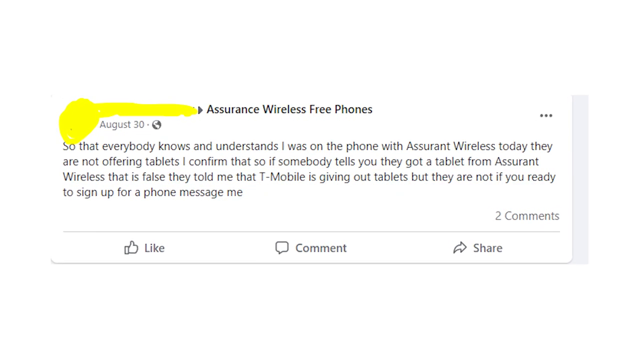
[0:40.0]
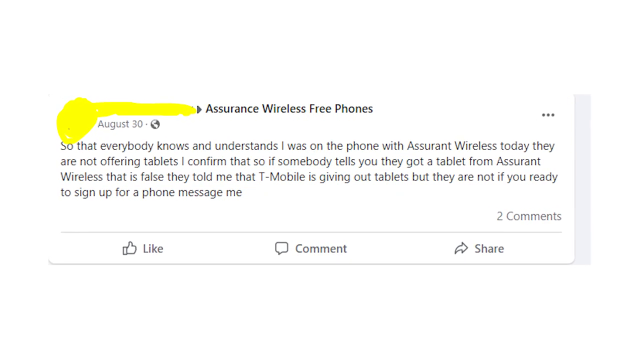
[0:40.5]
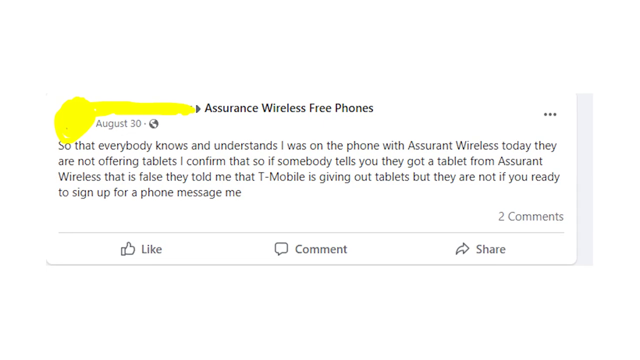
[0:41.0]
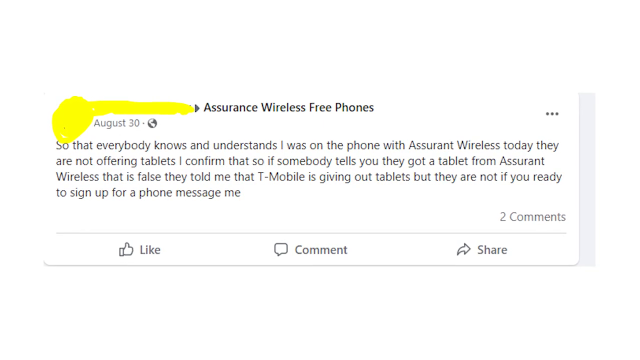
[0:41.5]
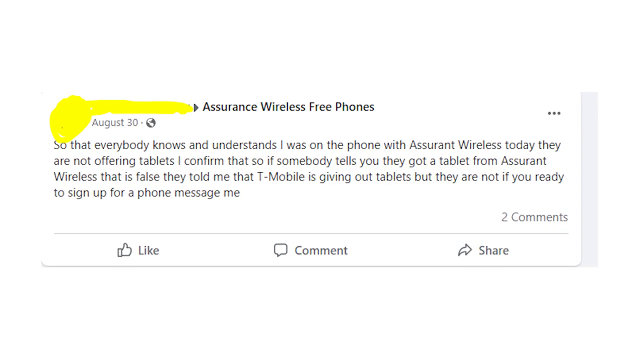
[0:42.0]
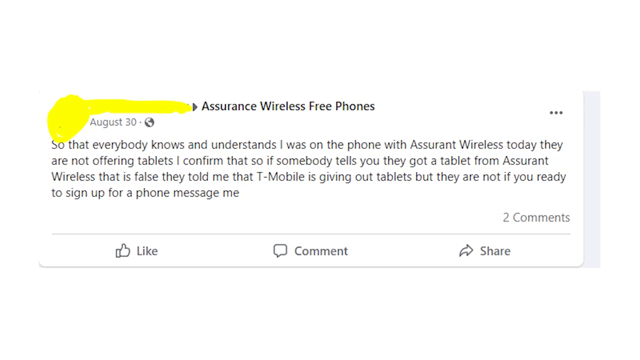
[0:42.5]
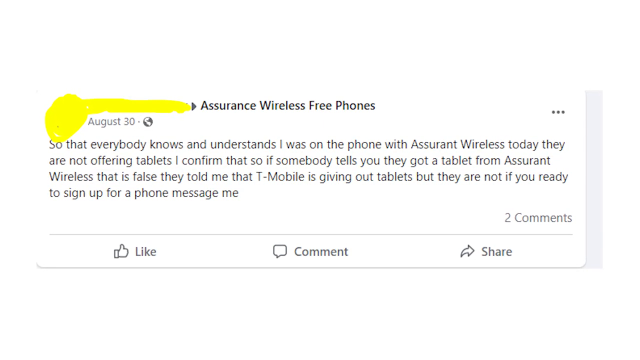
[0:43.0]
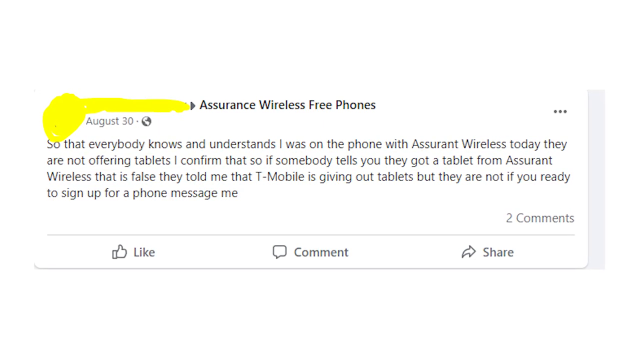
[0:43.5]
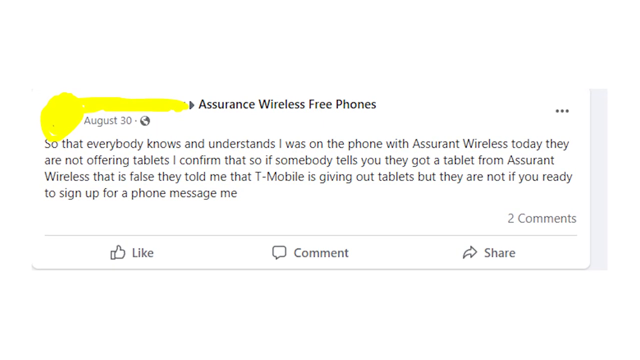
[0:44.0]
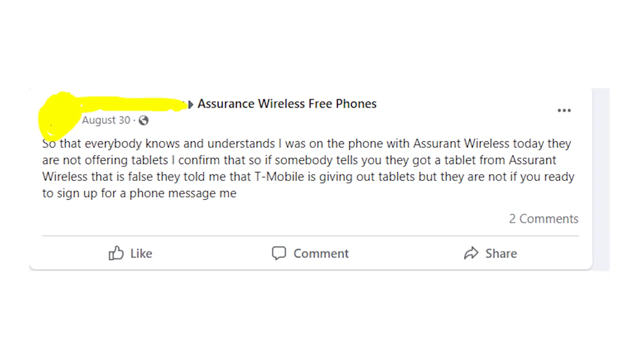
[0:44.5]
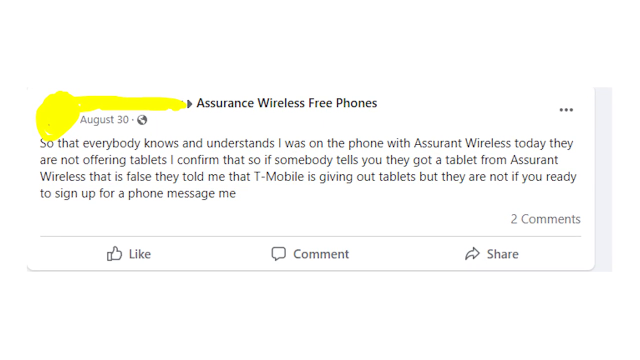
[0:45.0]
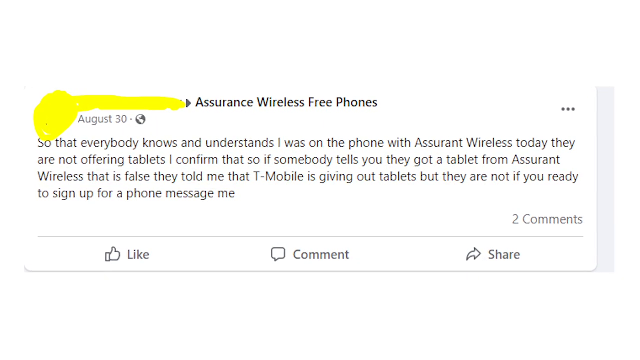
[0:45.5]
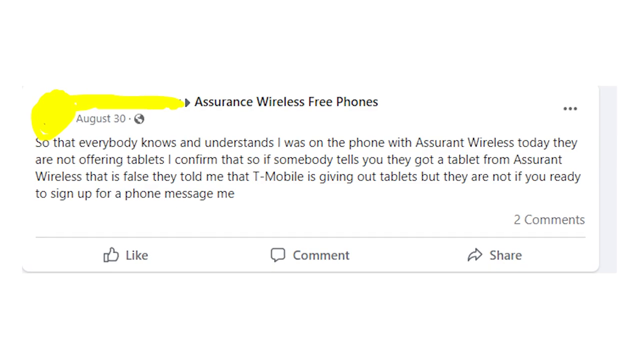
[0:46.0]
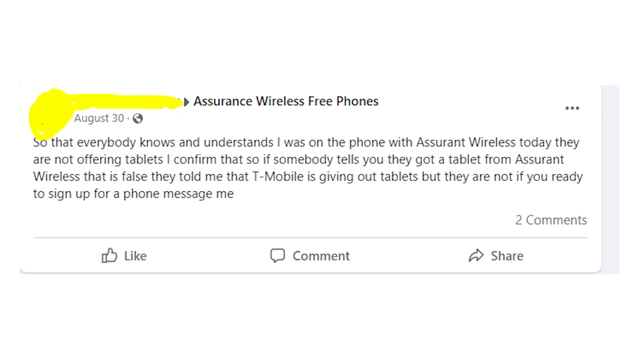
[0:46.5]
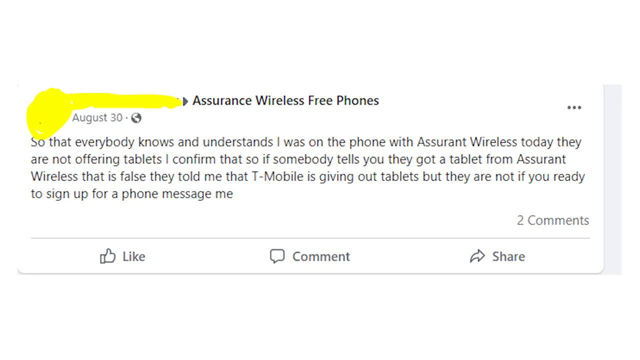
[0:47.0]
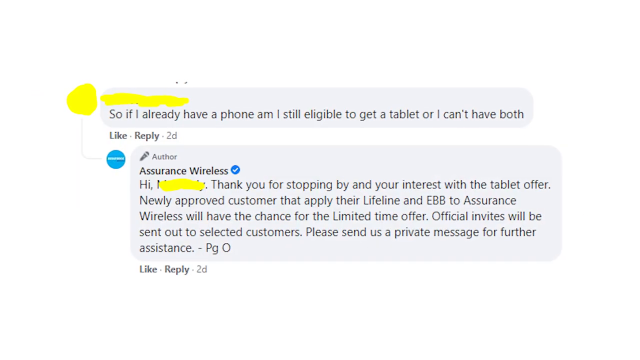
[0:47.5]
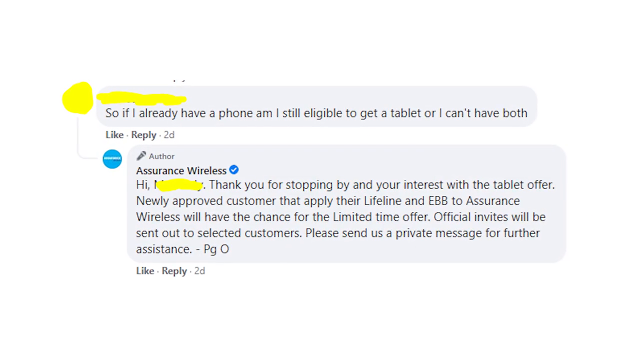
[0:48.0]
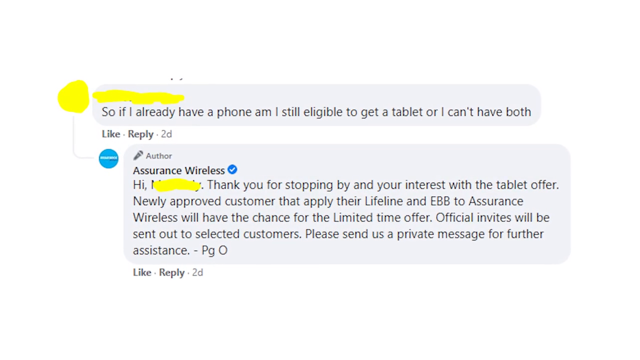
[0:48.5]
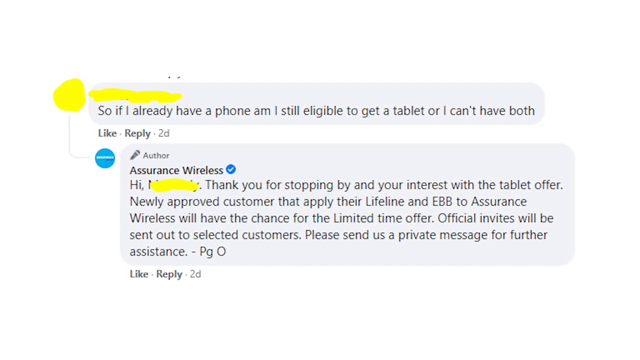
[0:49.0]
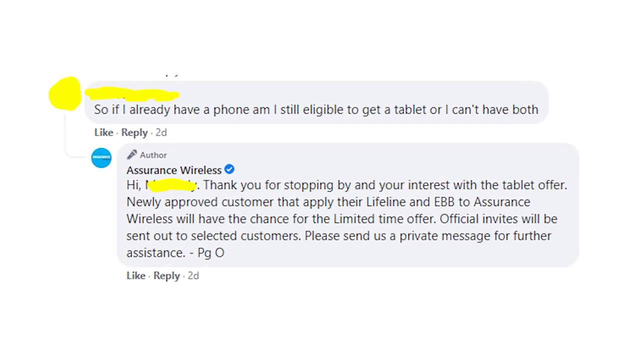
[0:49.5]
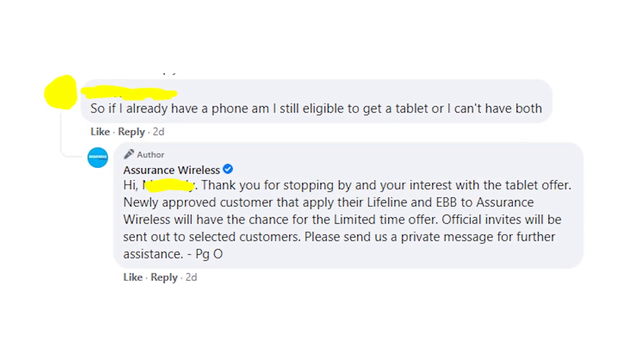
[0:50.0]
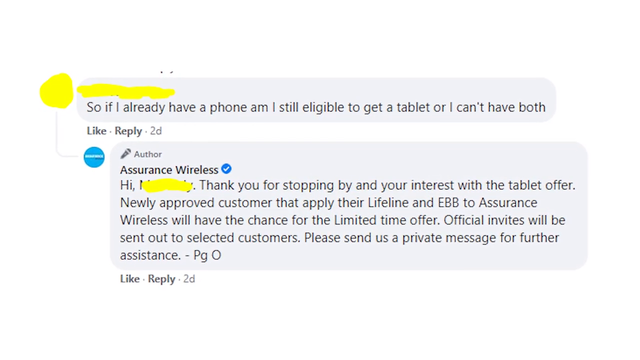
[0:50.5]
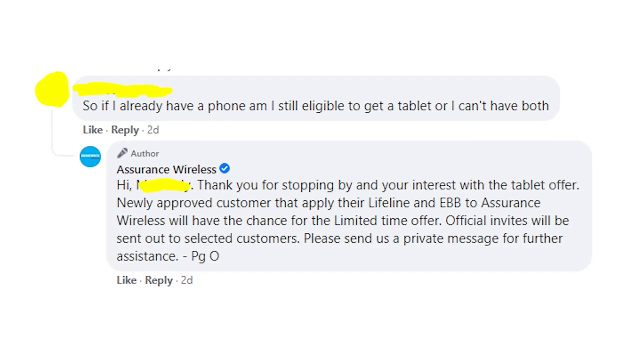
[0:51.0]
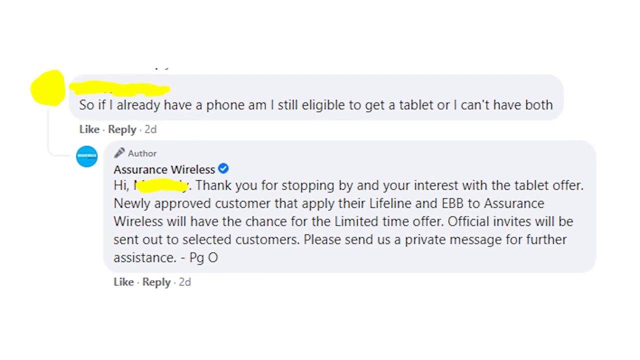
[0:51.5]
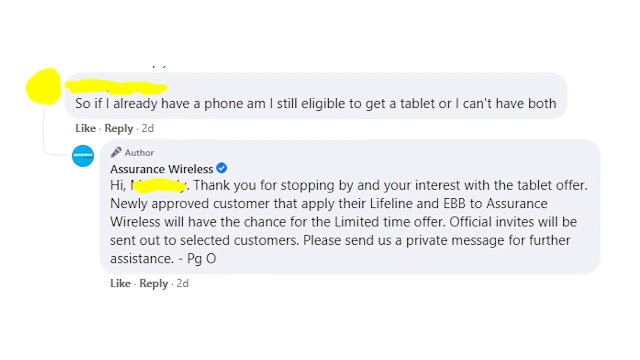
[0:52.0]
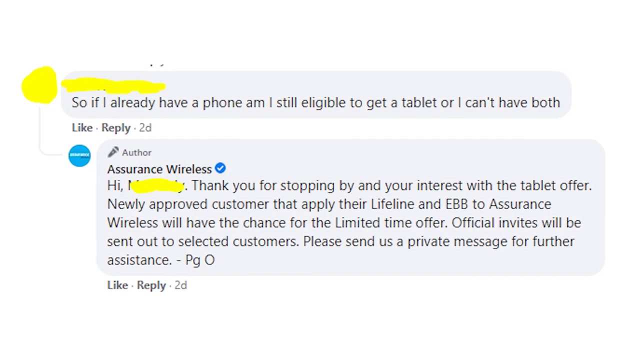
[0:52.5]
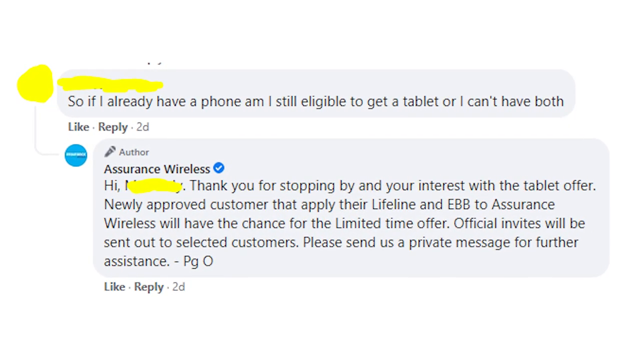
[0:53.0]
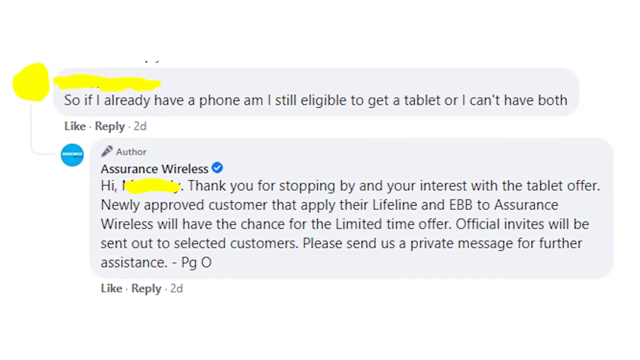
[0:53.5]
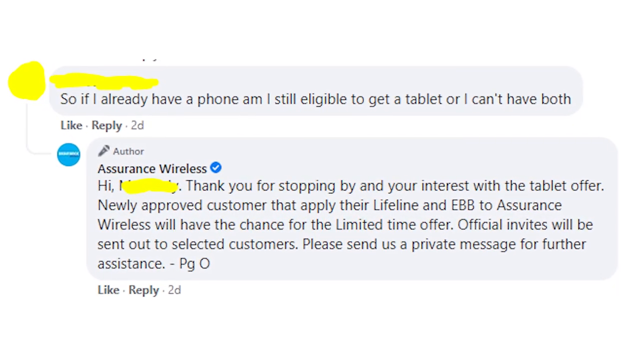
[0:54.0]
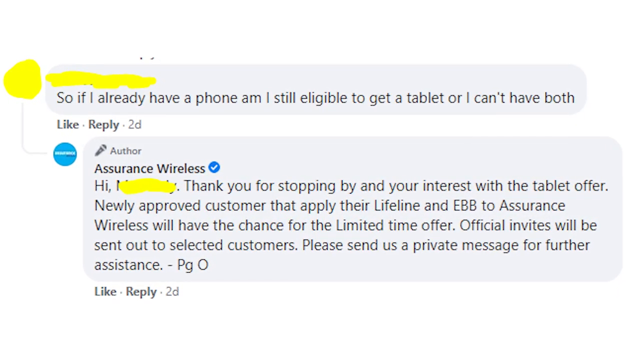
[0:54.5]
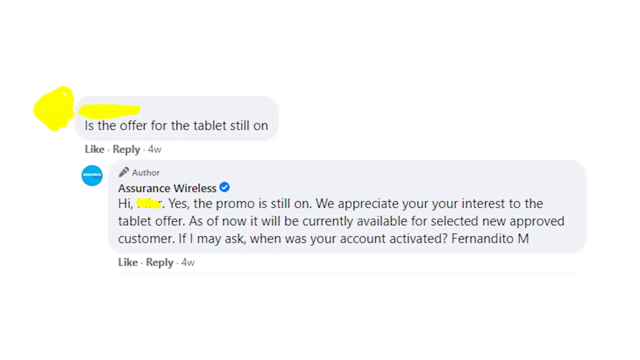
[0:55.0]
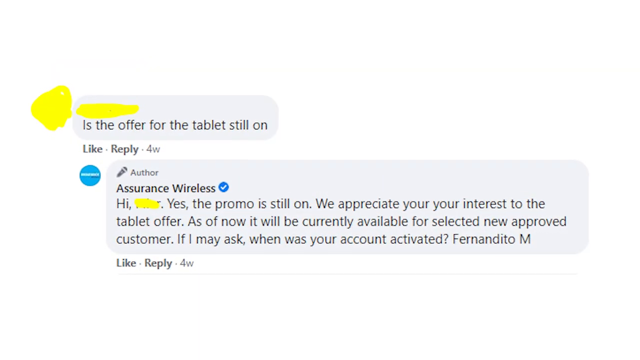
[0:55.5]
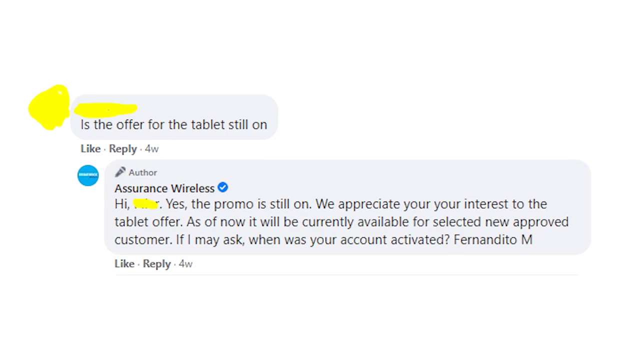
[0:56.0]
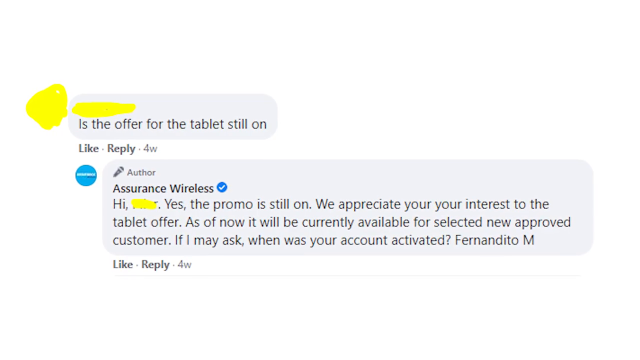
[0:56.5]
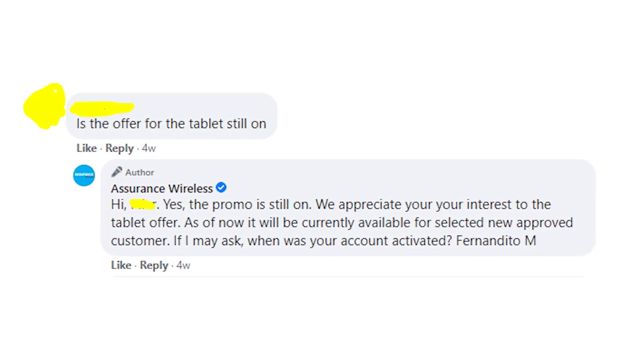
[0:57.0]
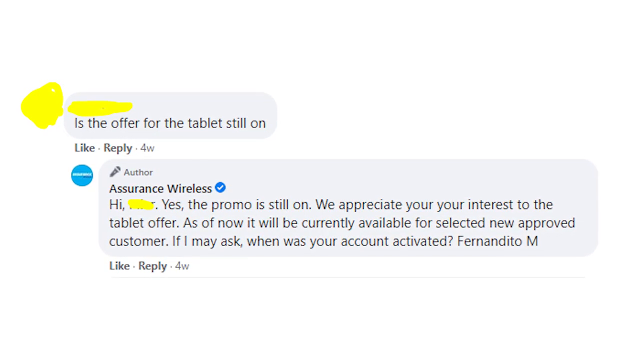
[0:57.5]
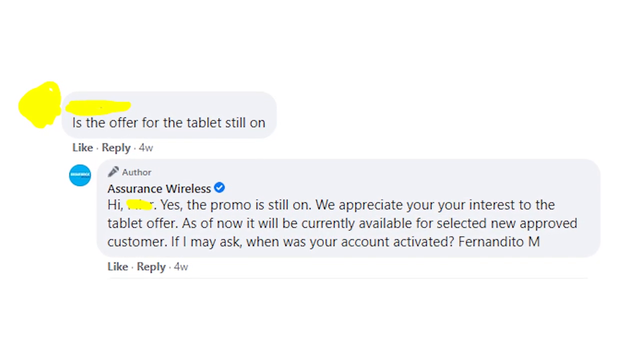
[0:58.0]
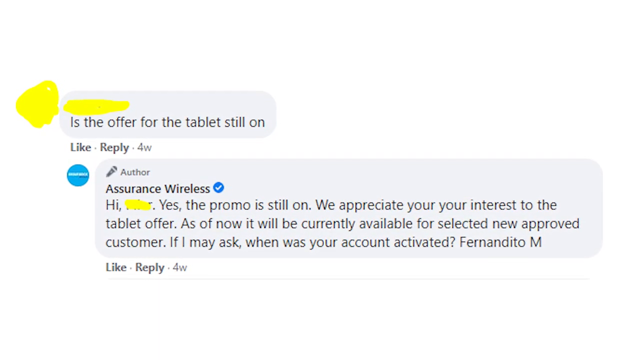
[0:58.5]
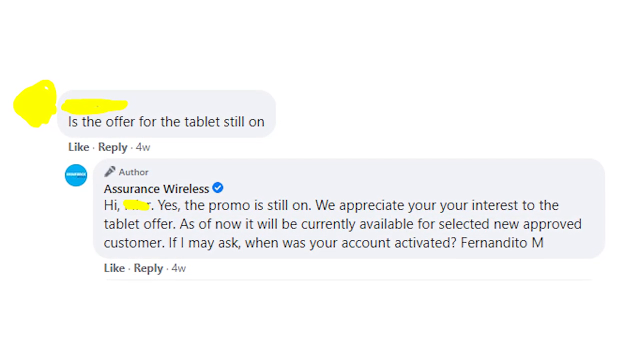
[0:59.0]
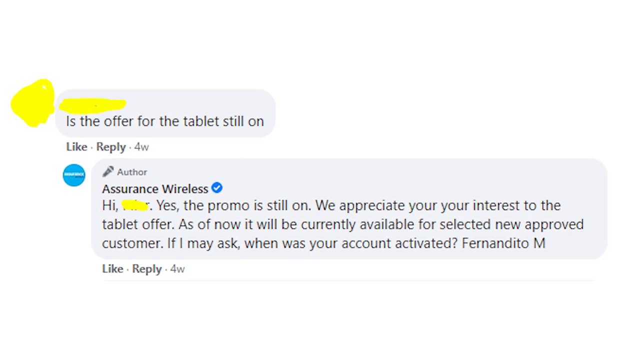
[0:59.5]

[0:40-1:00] The focus moves to another post by a user about the cell phones. The user's name and icon are blurred out with yellow coloring. The post states "Assurance Wireless Free Phones" and was posted on August 30th; it appears to be visible to everybody, based on the globe symbol beside it. It reads: "So that everybody knows and understands, I was on the phone with Assurant Wireless today, they are not offering tablets. I confirmed that, so if somebody tells you they got a tablet from Assurant Wireless, that is false. They told me that T-Mobile is giving out tickets, but they are not. If you ready to sign up for a phone, message me." There are two comments so far, along with the standard prompts to like, comment or share. The view slowly zooms in on this screenshot, then cuts to another segment showing a user asking a question and a response.